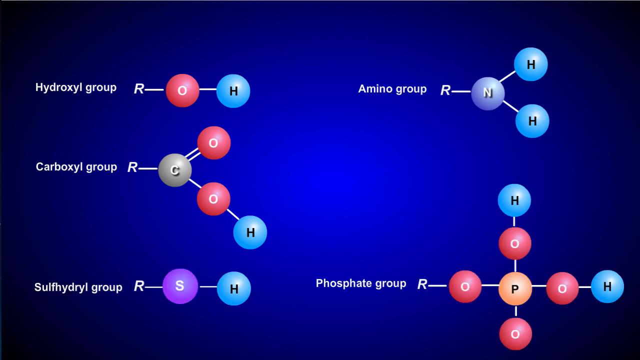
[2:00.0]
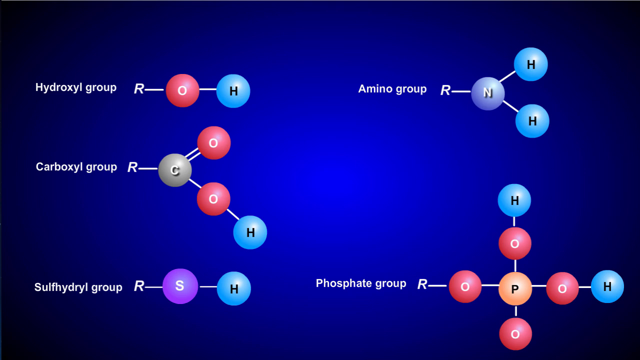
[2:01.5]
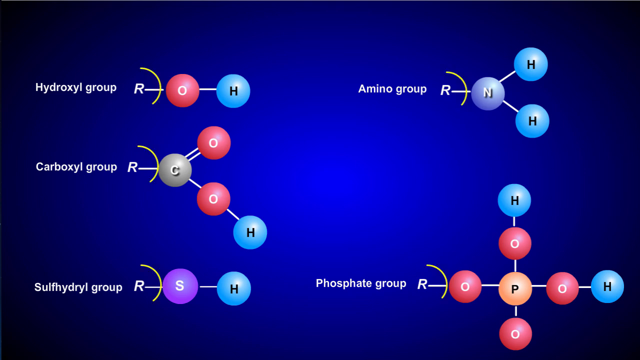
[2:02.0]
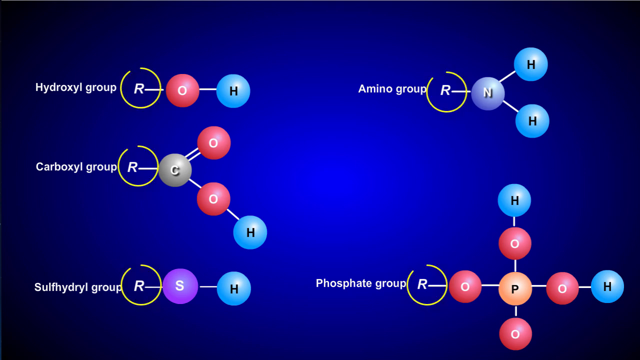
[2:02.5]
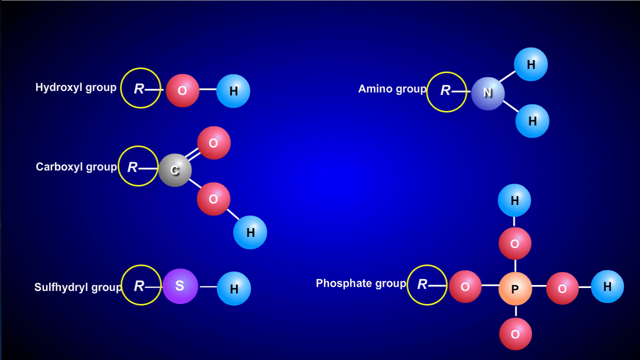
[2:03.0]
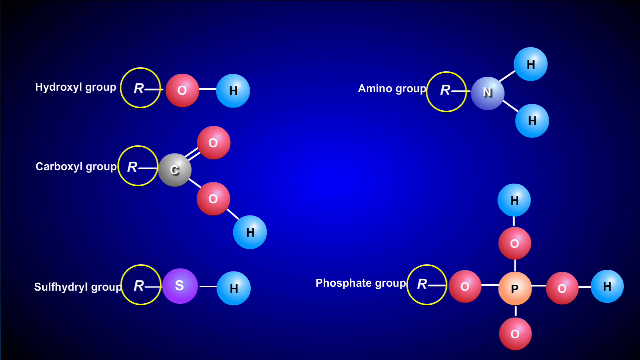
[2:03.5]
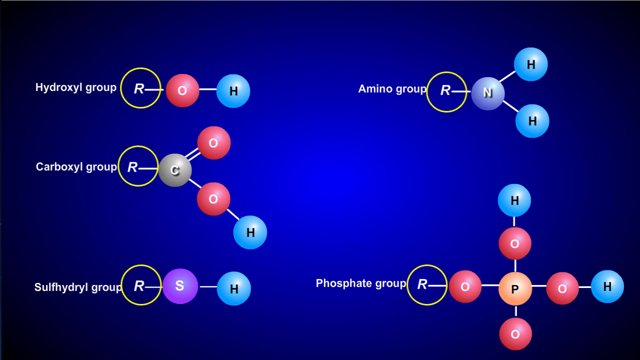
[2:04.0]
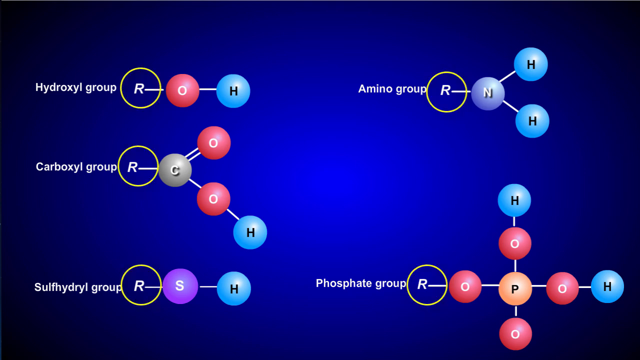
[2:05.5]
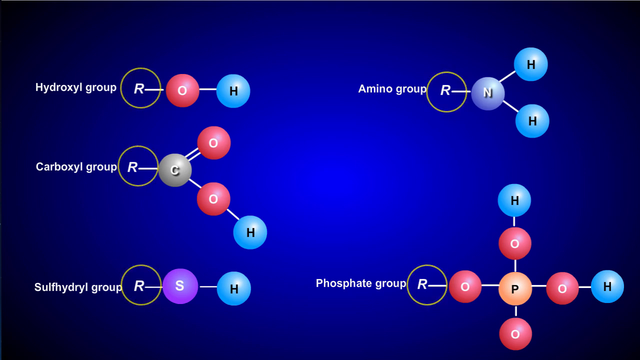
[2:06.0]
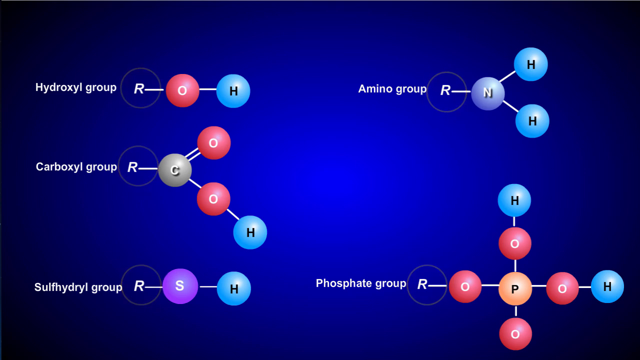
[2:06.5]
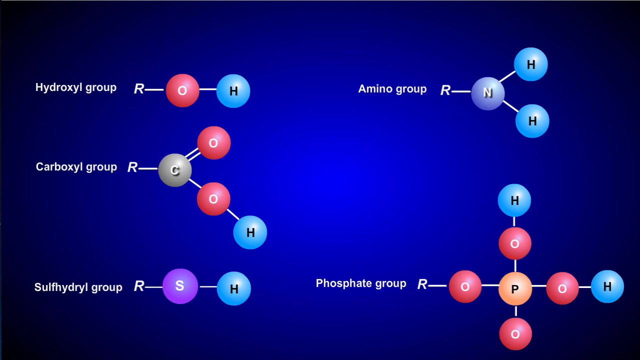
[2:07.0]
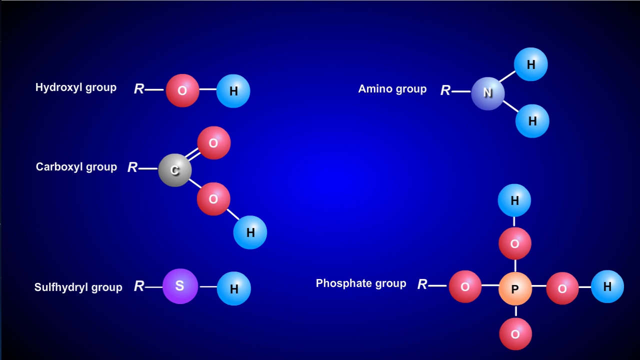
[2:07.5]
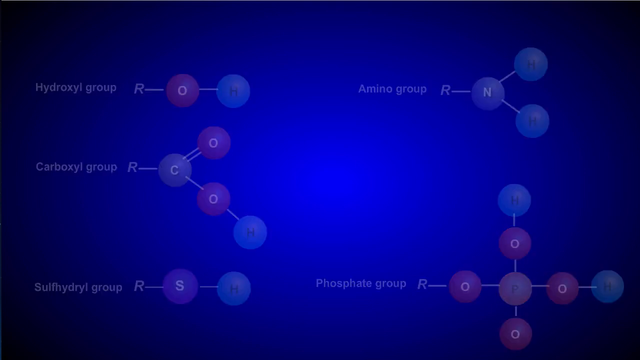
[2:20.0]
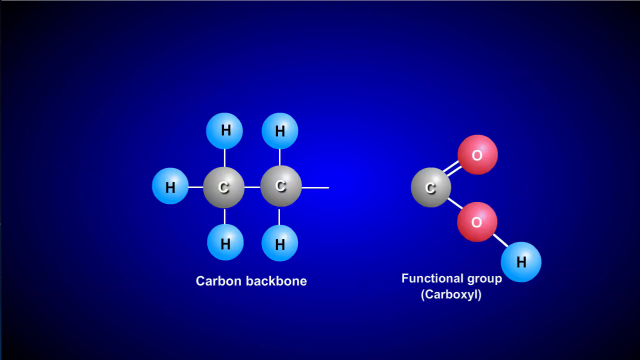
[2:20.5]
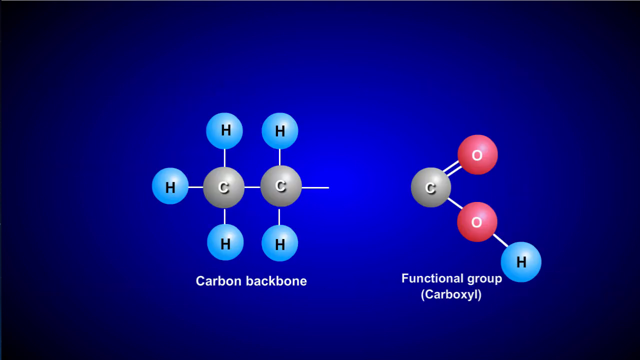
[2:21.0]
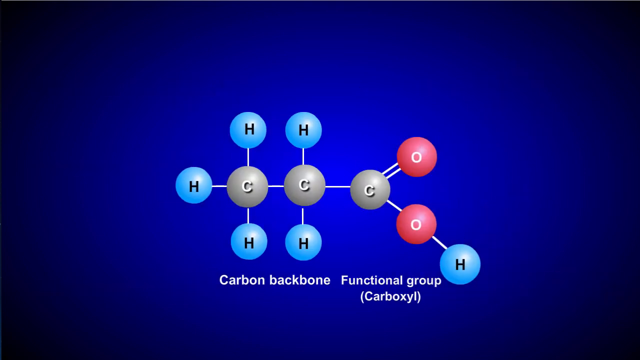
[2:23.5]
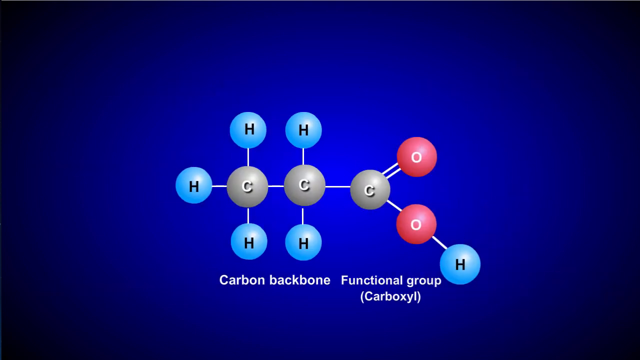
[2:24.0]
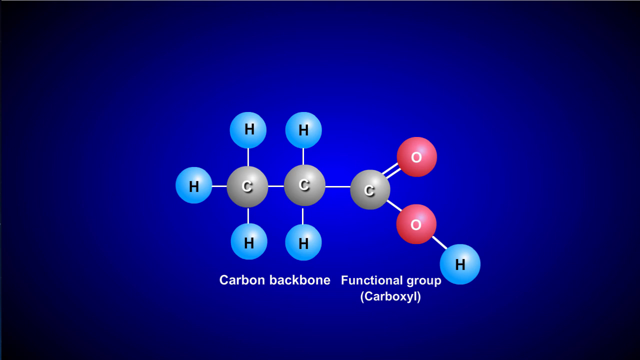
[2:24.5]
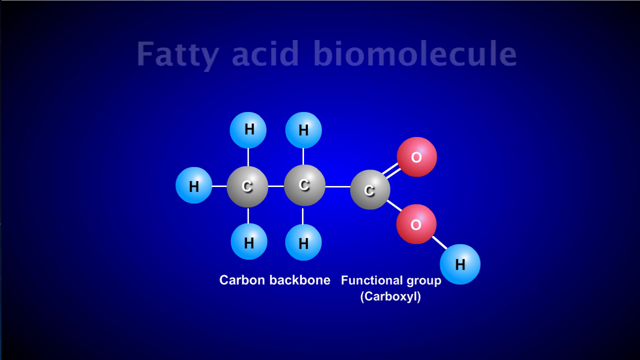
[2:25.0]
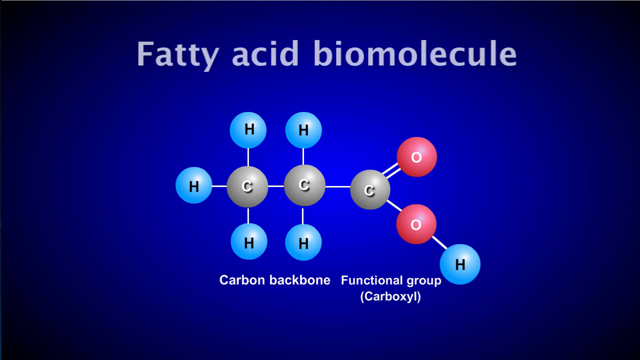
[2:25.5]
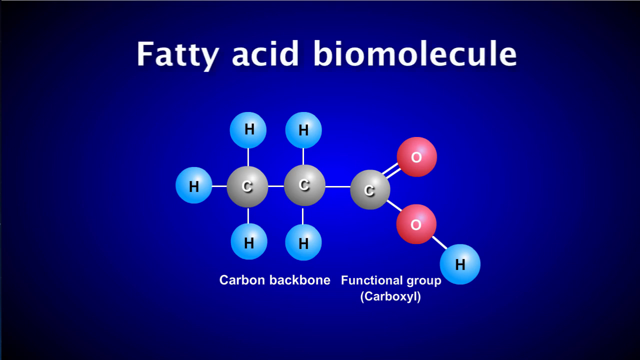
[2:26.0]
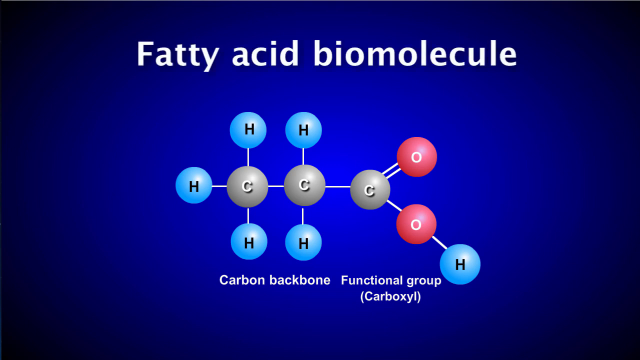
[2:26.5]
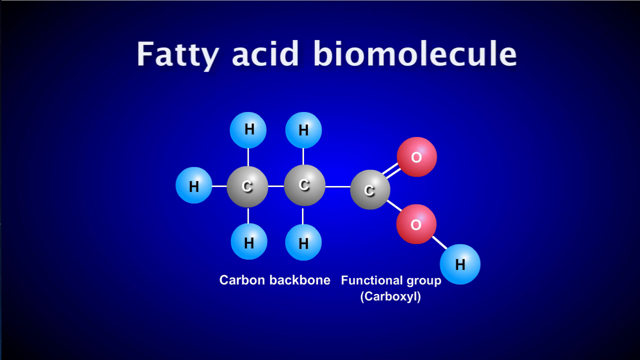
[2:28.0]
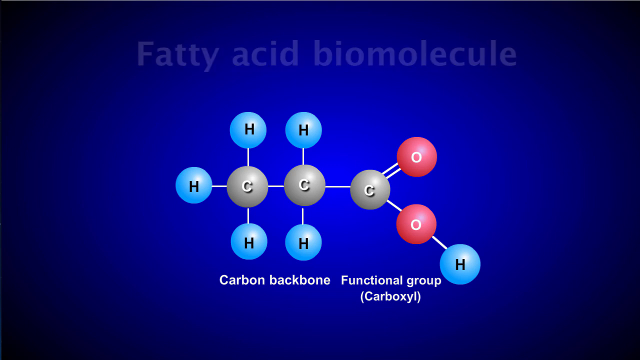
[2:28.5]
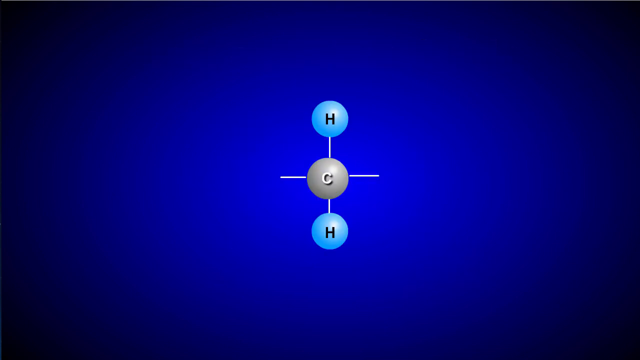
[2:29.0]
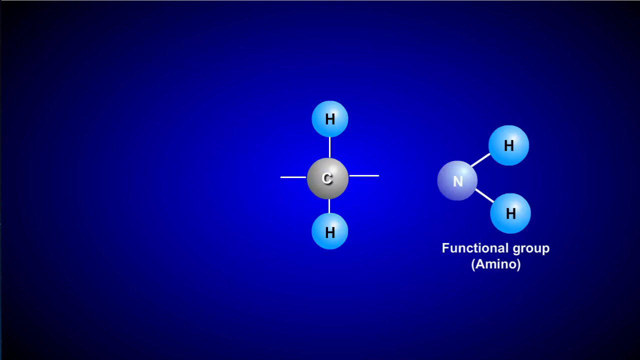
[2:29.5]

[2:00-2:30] Many different molecules with various R groups, including amino, hydroxyl, carboxyl and other groups, are clustered around one area, interacting with each other. The hydroxyl and other groups connect together, related to a fatty acid biomolecule.